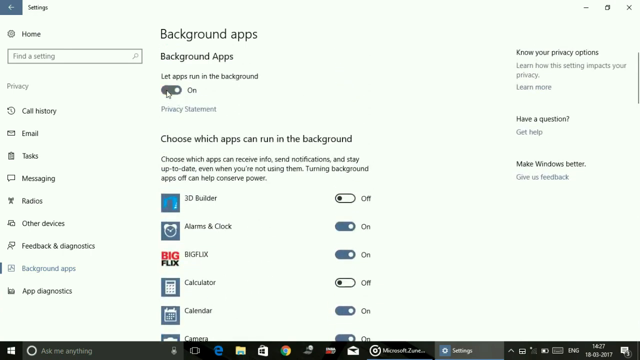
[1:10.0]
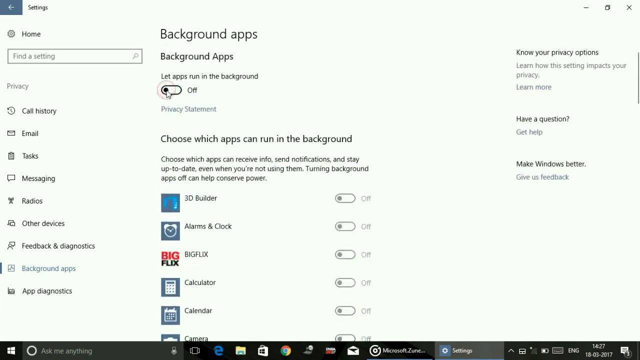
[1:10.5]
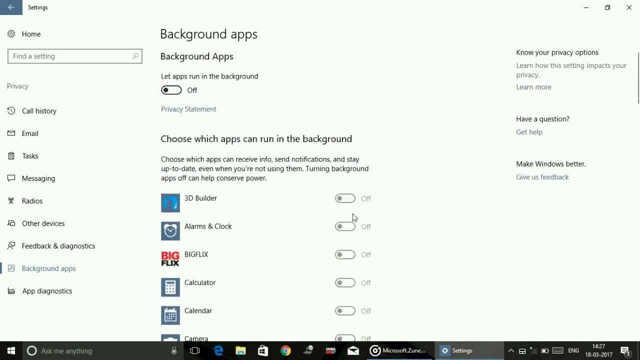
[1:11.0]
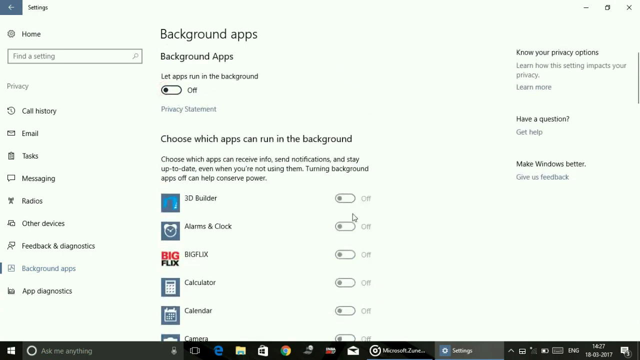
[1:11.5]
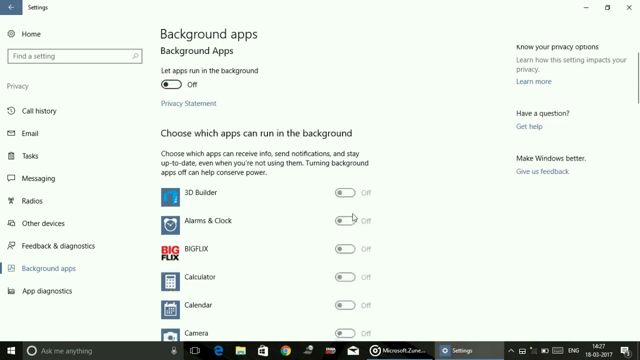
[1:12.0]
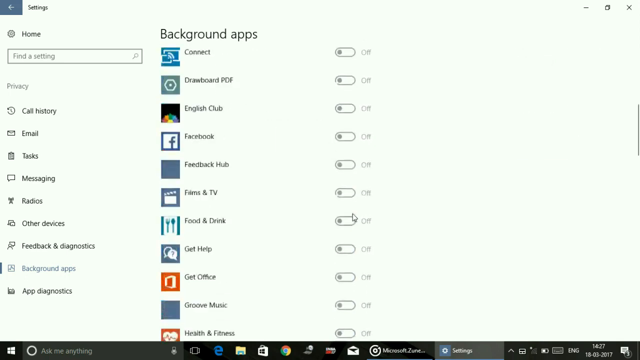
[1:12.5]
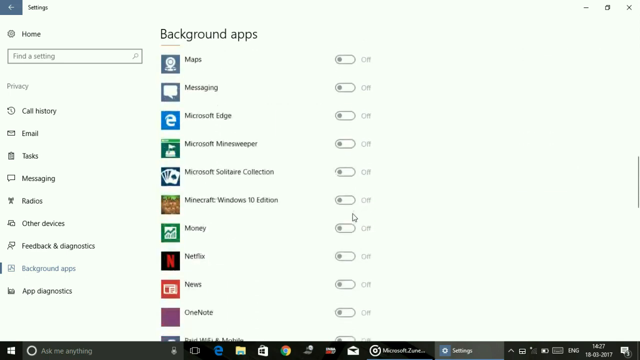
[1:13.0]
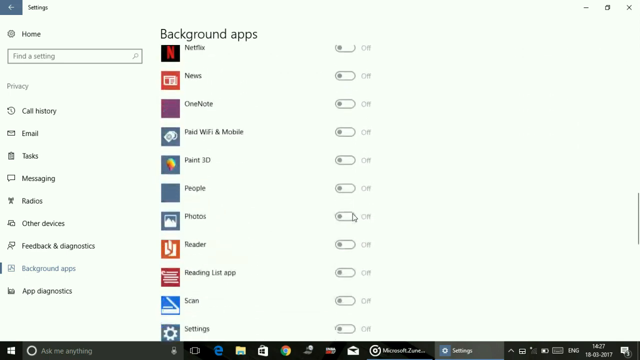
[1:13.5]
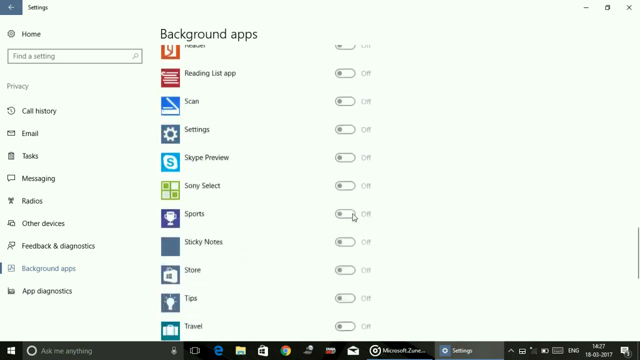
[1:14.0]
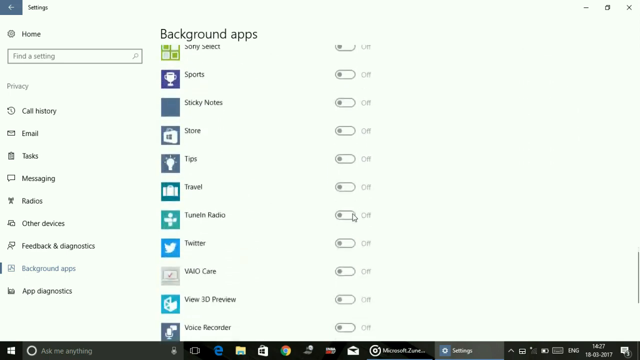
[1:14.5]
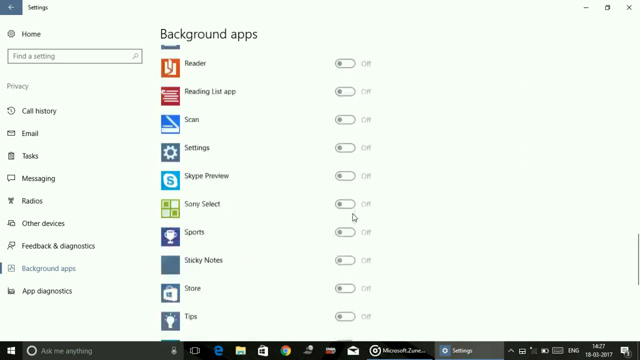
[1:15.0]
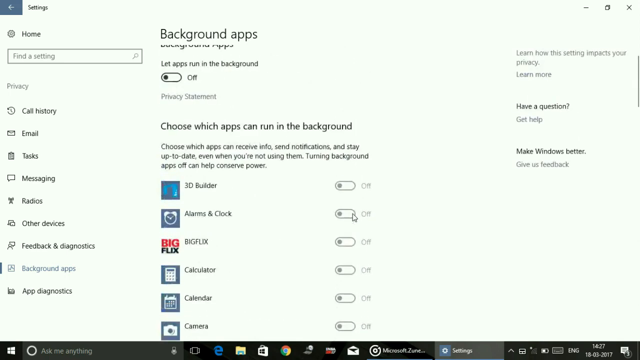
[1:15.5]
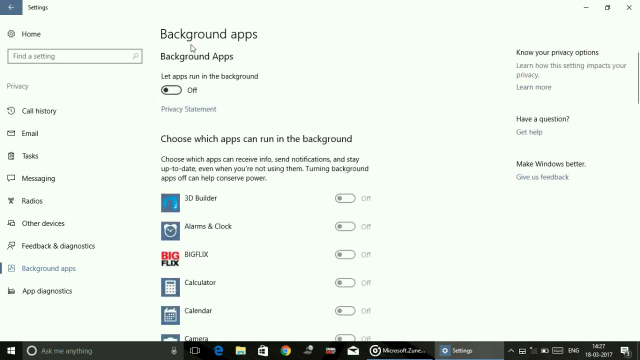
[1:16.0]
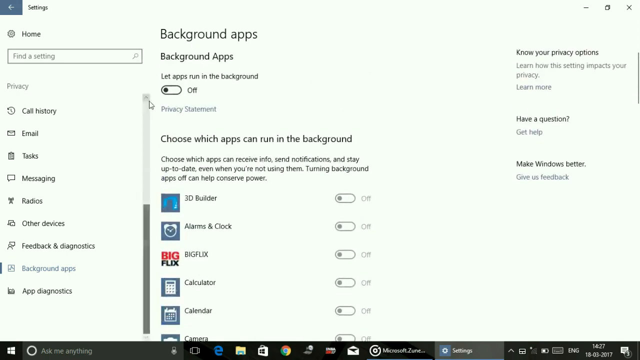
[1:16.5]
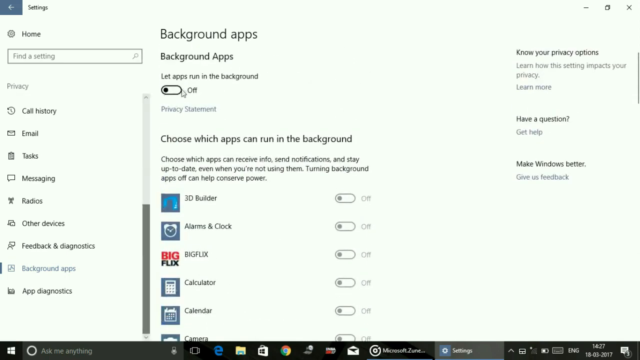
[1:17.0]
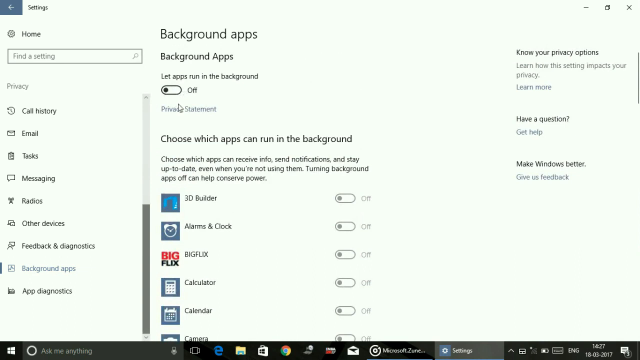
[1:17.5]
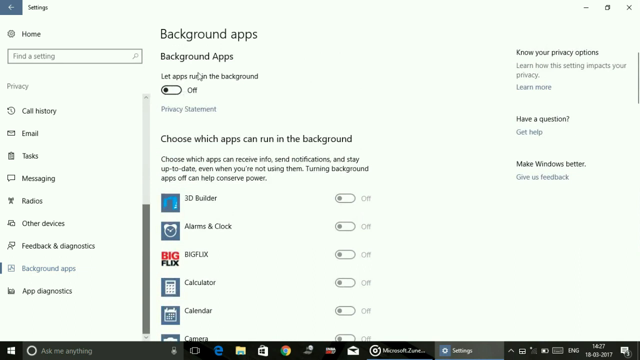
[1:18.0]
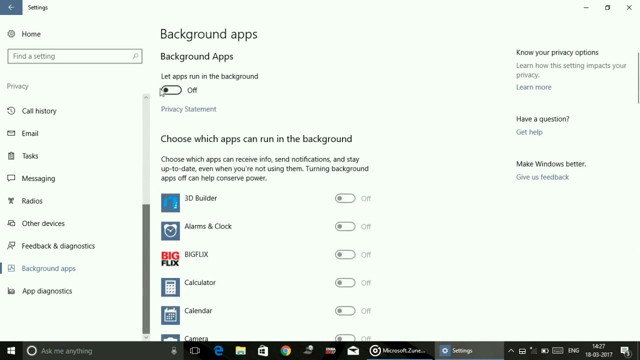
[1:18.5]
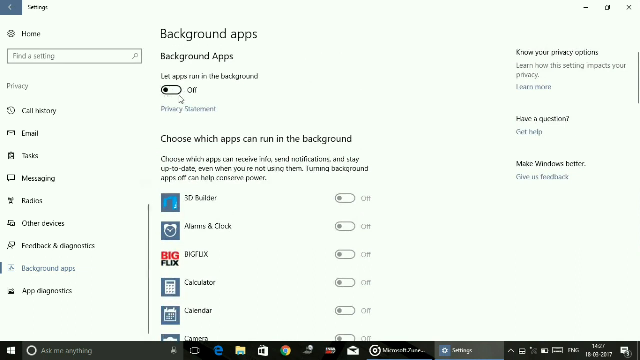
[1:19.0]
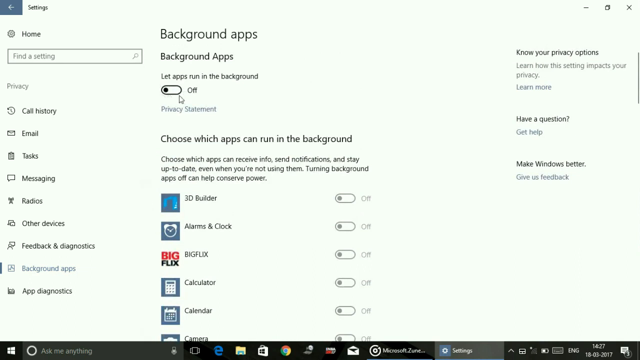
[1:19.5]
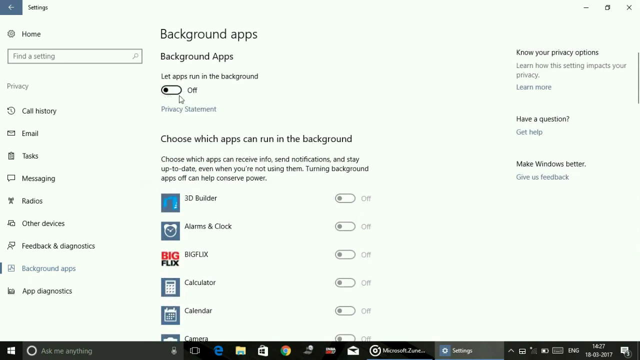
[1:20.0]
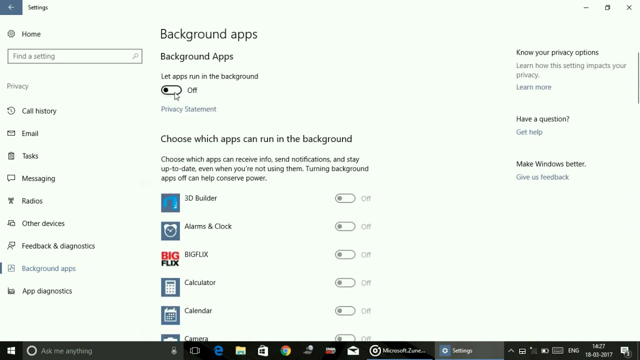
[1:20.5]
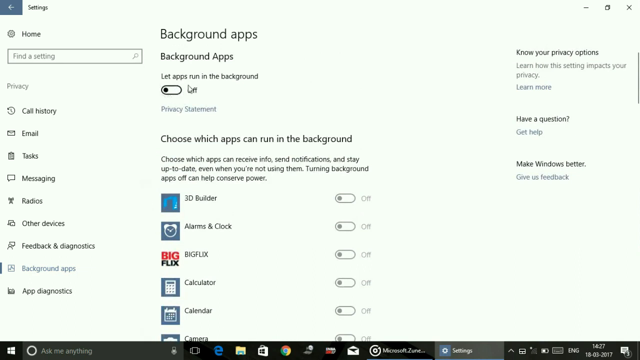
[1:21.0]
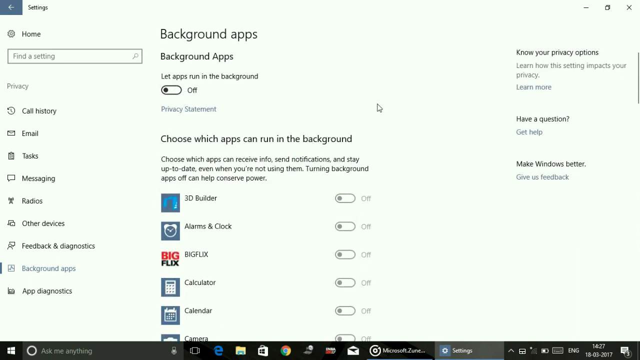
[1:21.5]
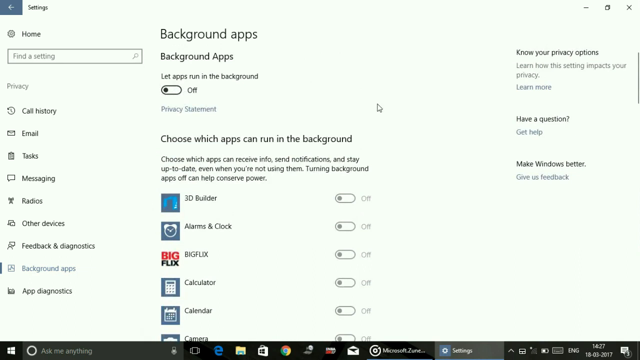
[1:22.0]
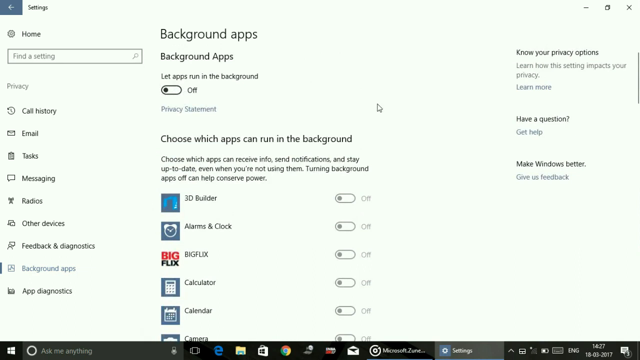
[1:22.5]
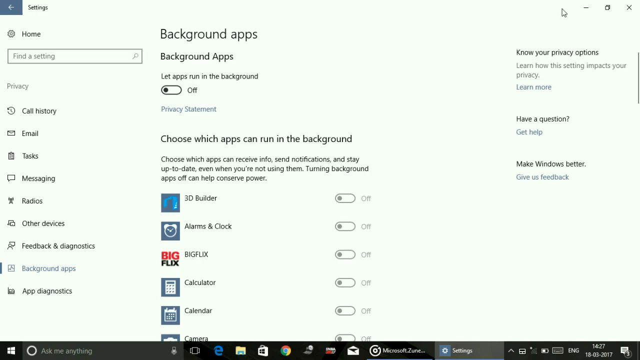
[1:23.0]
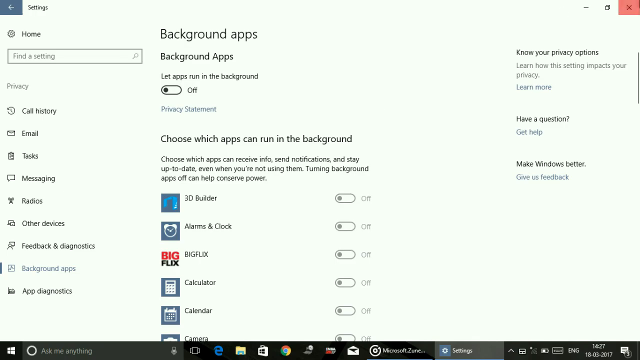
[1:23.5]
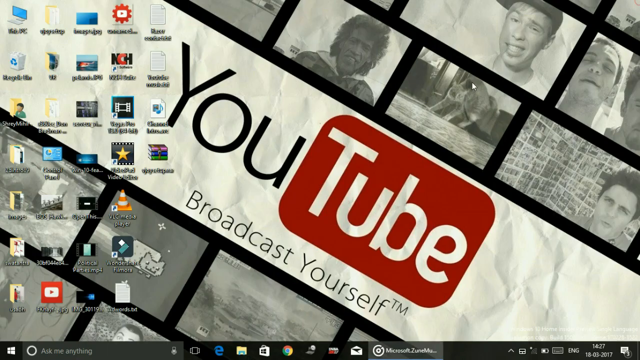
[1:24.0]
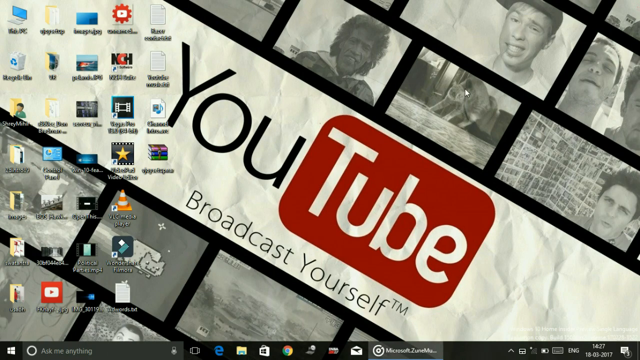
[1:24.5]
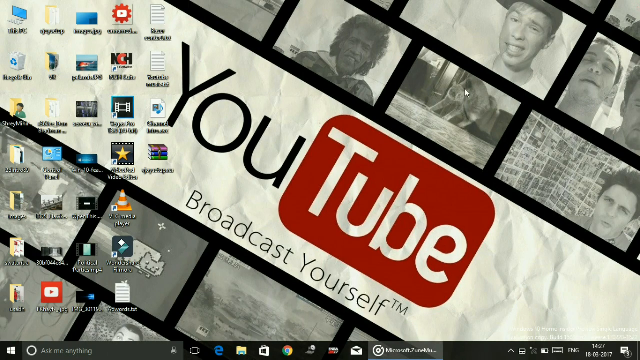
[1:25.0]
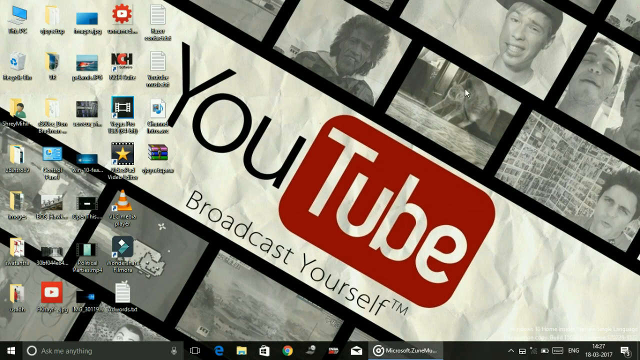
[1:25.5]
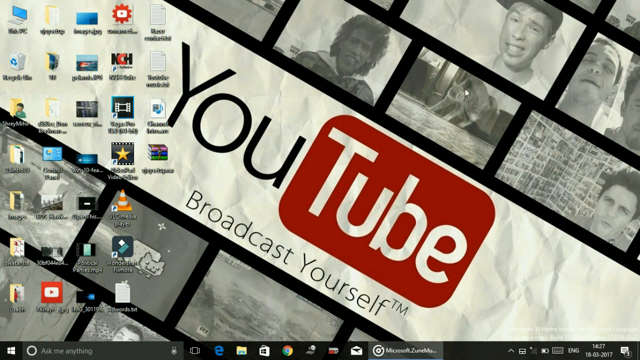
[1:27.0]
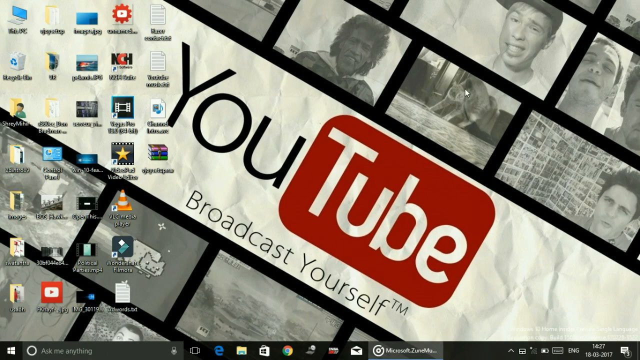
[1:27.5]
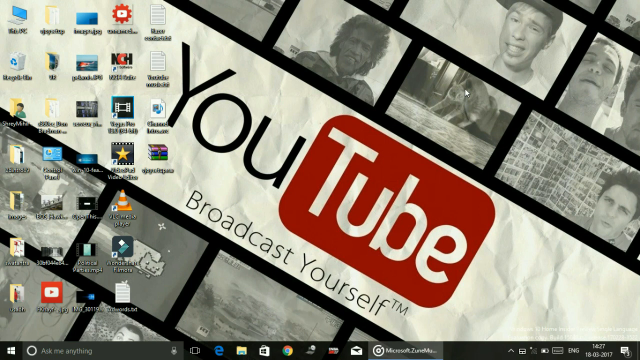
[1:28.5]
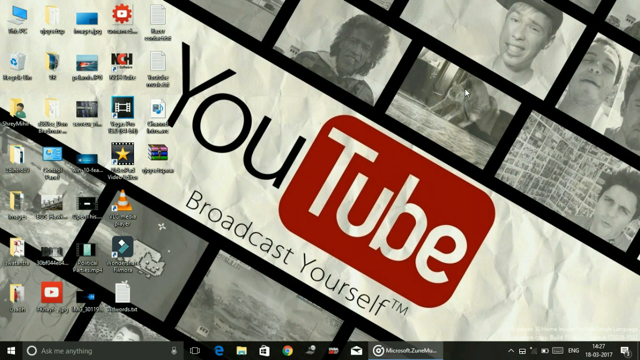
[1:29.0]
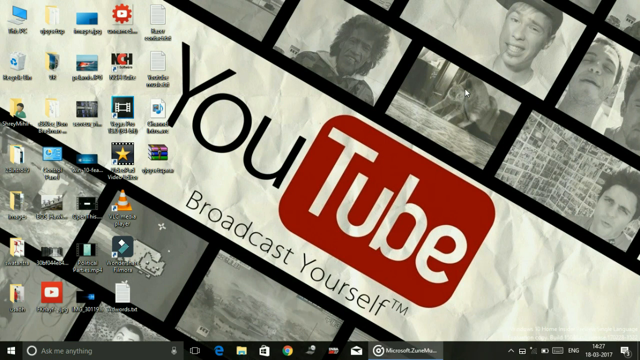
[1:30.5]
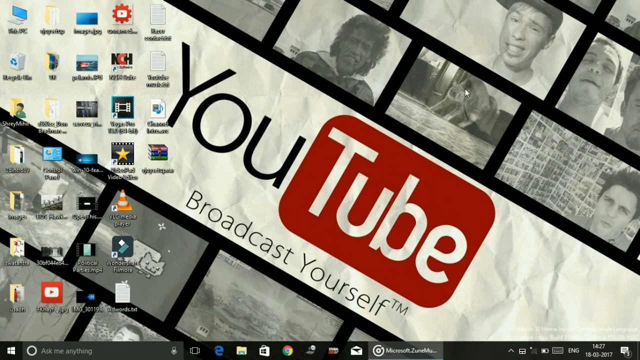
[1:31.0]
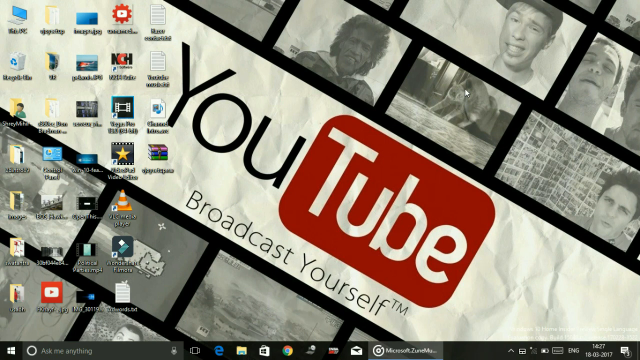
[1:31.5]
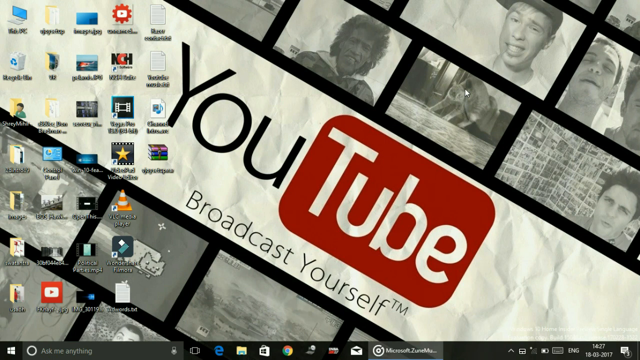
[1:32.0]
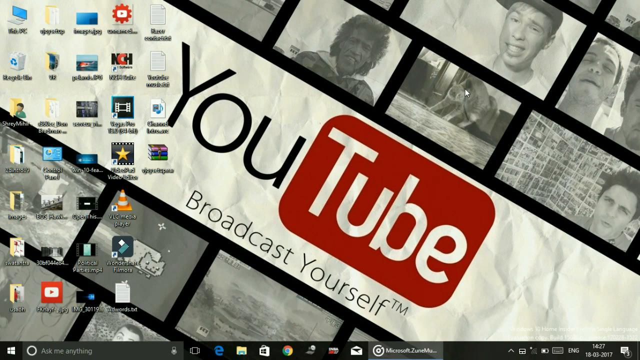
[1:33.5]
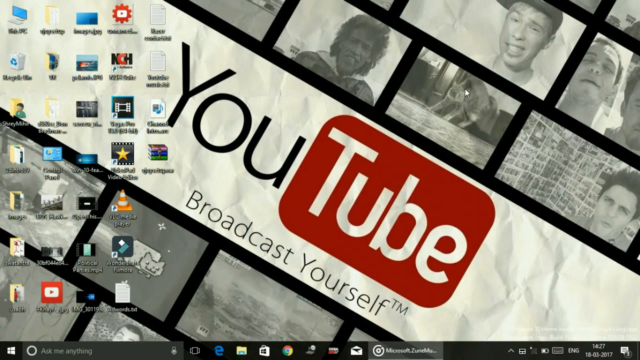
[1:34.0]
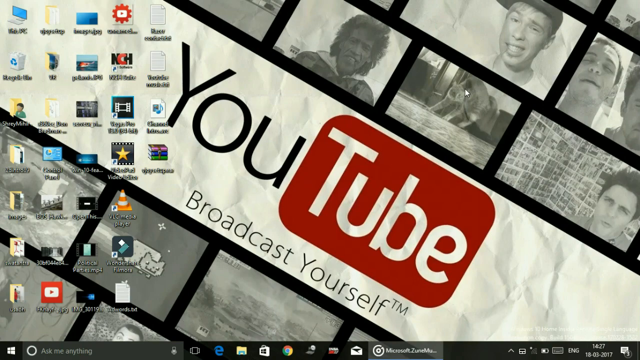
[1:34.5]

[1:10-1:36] The Windows Settings screen remains open with background apps selected. The cursor hovers over the section where background apps can be selected, and the list of apps scrolls up and down. The cursor then goes up toward the top of the screen and closes the Windows Settings box altogether, revealing the Windows desktop seen earlier, with its wallpaper saying "YouTube broadcast yourself" and desktop icons lined up in columns and rows on the left of the screen. There are no people, animals or other living things present; the whole shot is a screen capture of interactions in Windows 10 on a PC, and it is not clear exactly what is happening or what the purpose is.